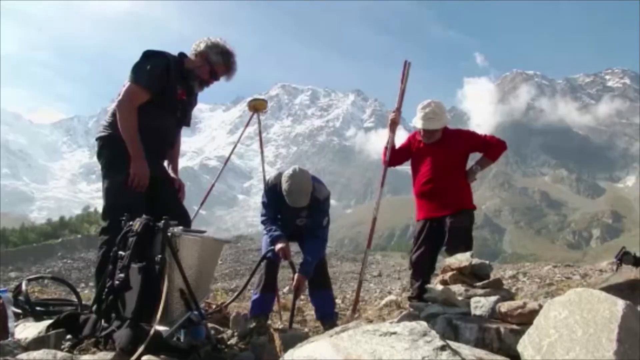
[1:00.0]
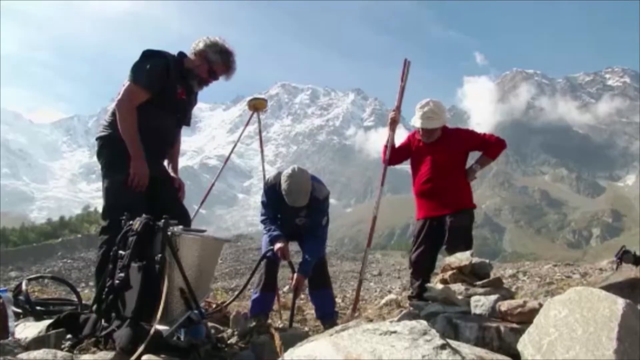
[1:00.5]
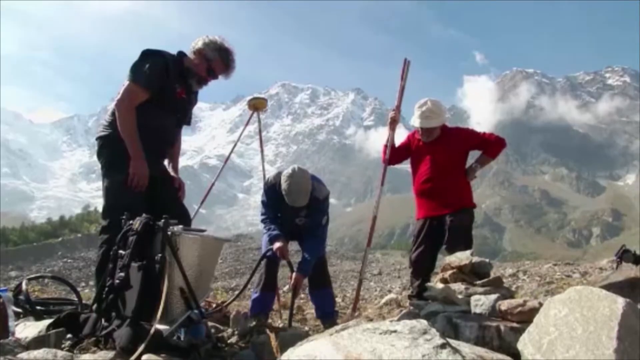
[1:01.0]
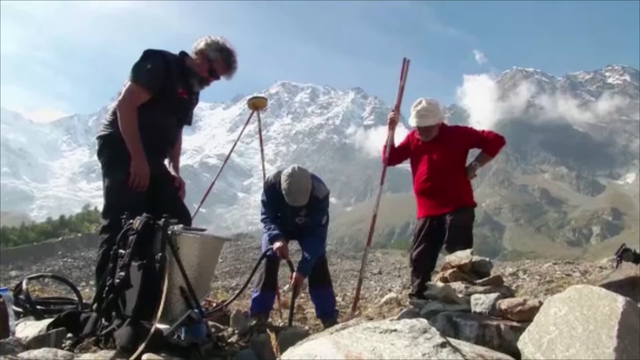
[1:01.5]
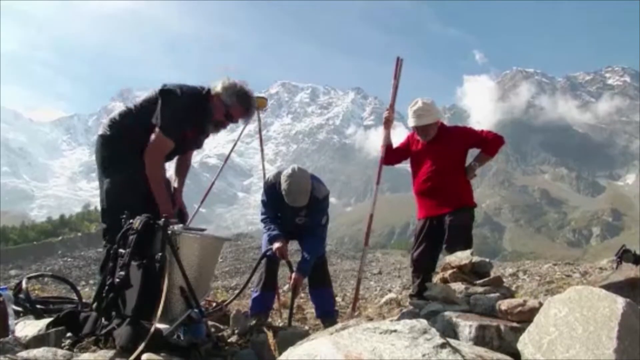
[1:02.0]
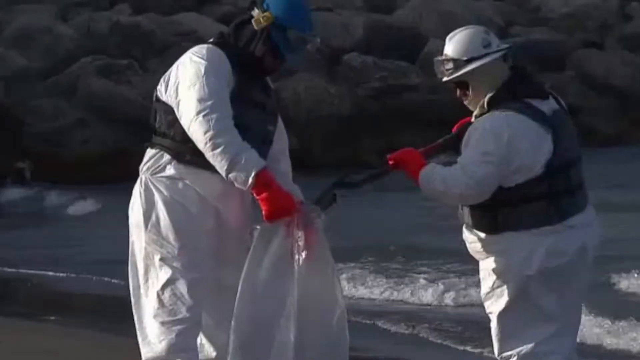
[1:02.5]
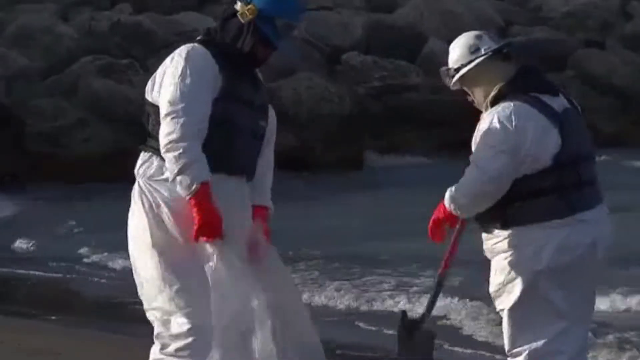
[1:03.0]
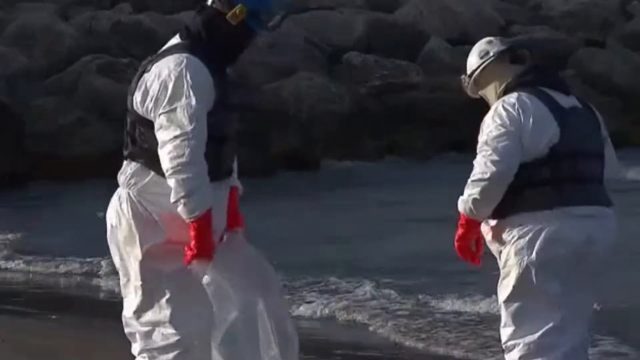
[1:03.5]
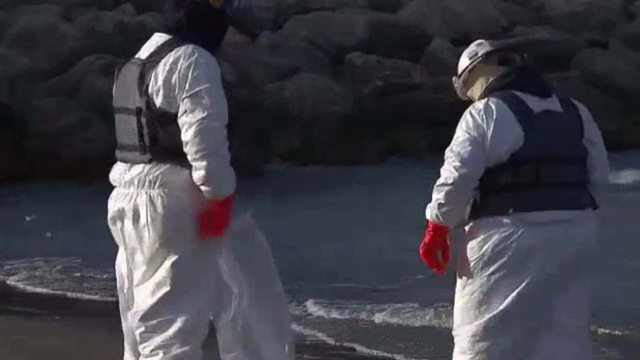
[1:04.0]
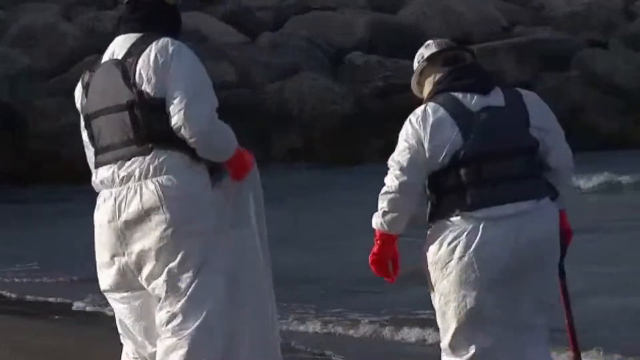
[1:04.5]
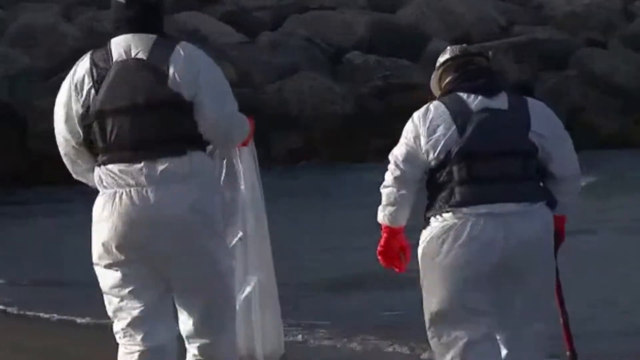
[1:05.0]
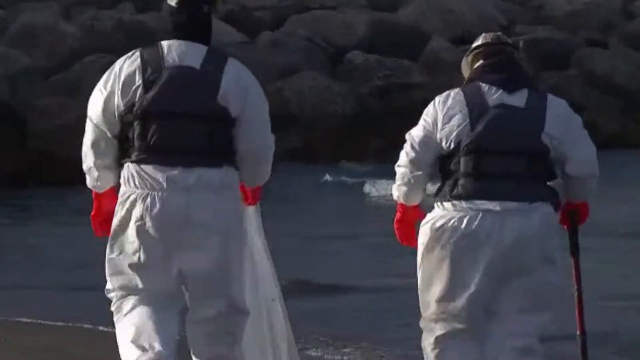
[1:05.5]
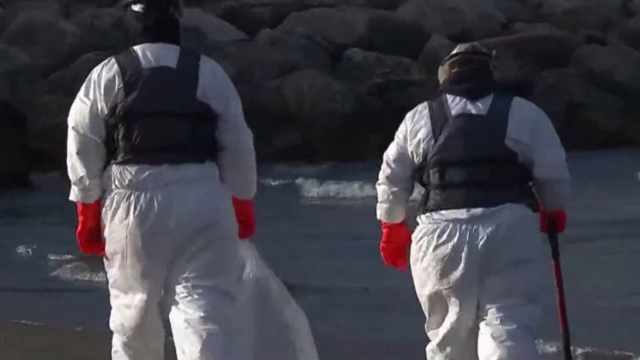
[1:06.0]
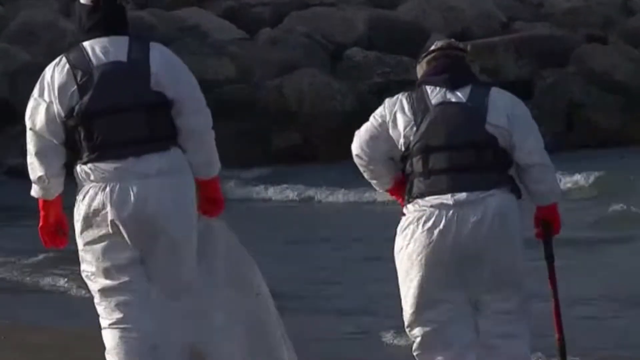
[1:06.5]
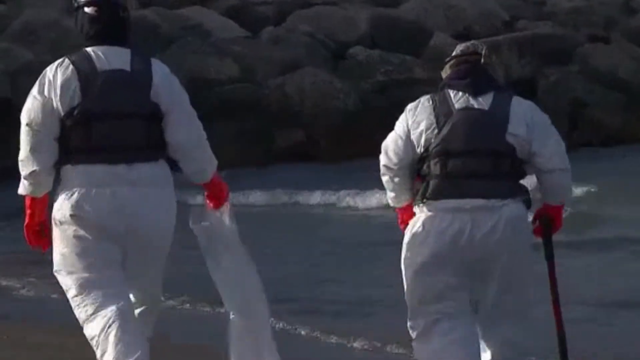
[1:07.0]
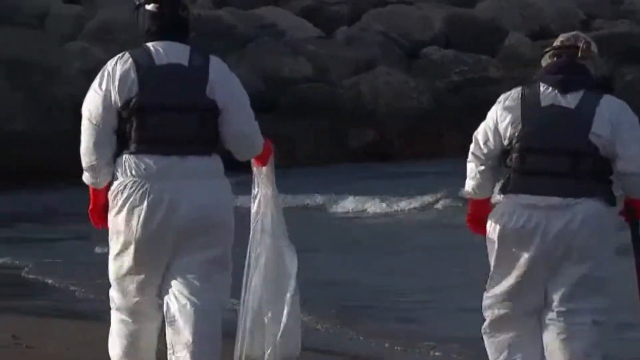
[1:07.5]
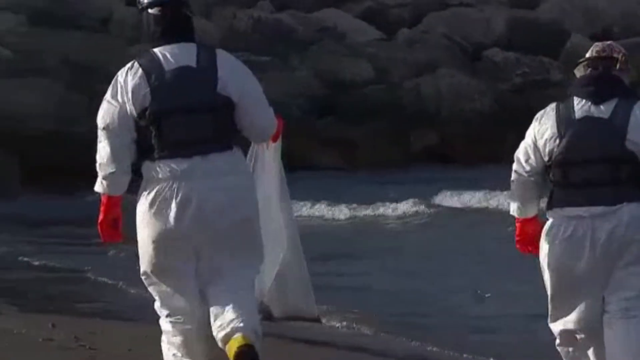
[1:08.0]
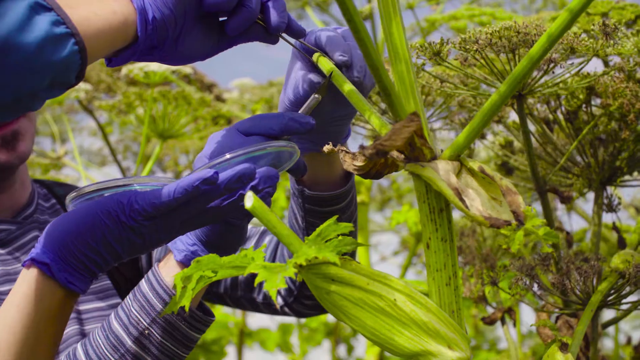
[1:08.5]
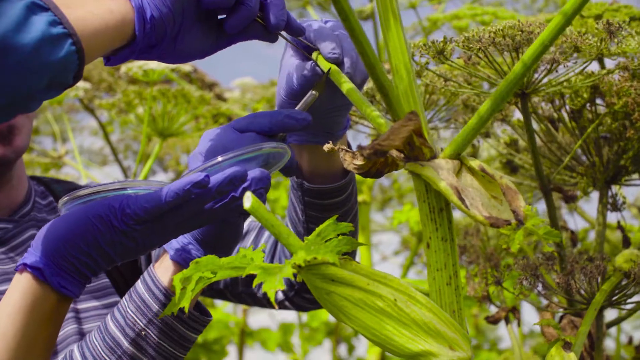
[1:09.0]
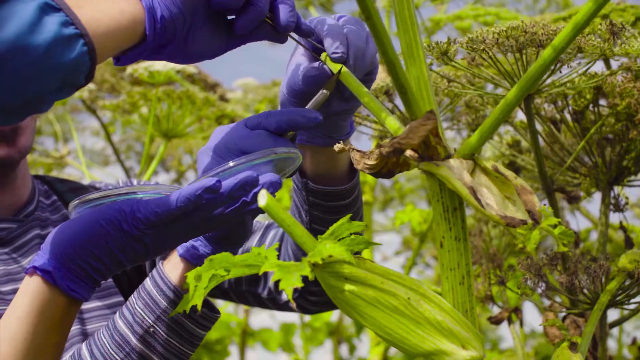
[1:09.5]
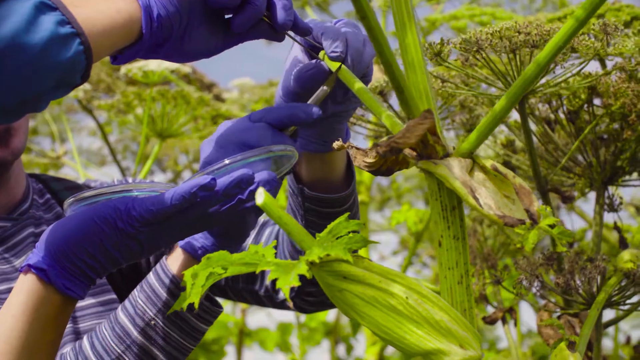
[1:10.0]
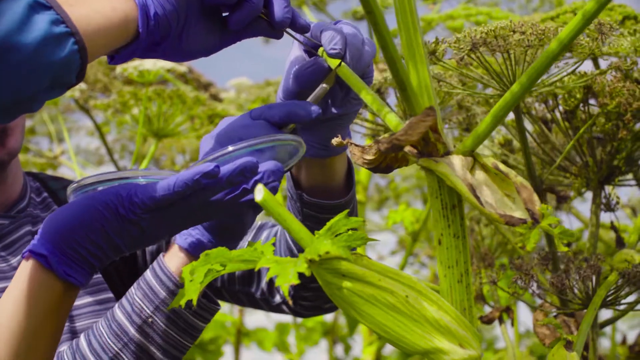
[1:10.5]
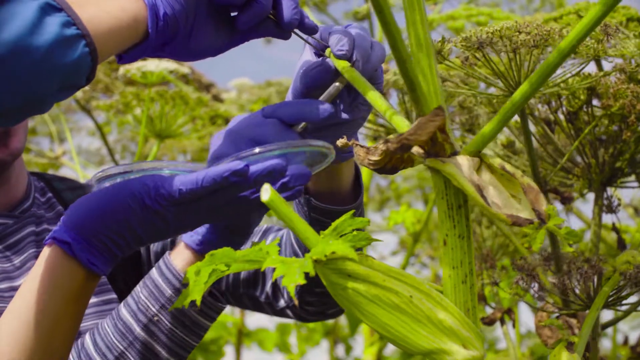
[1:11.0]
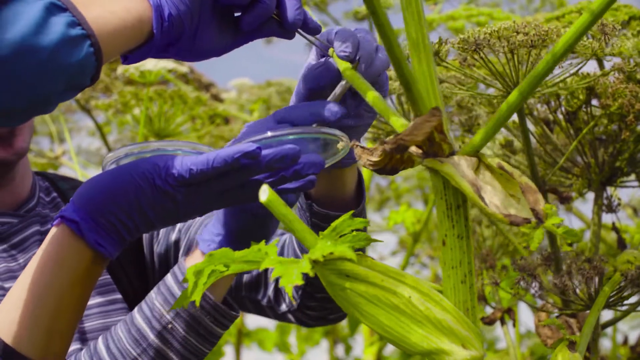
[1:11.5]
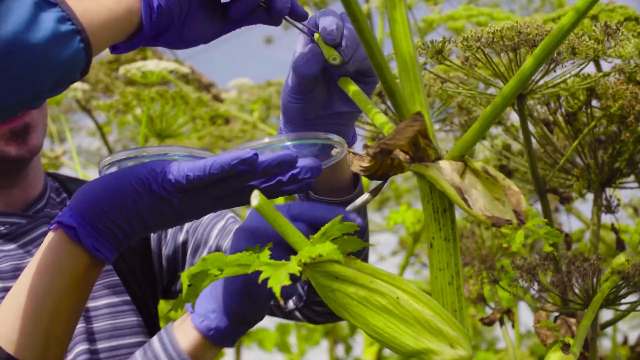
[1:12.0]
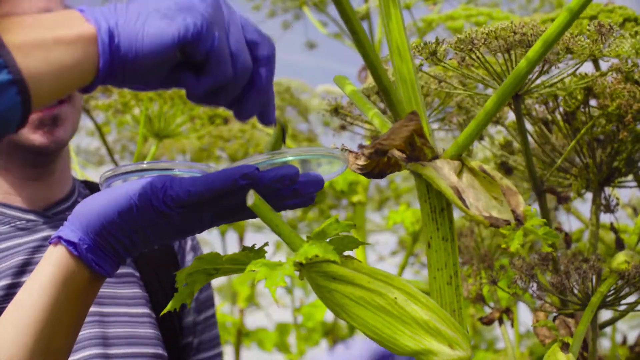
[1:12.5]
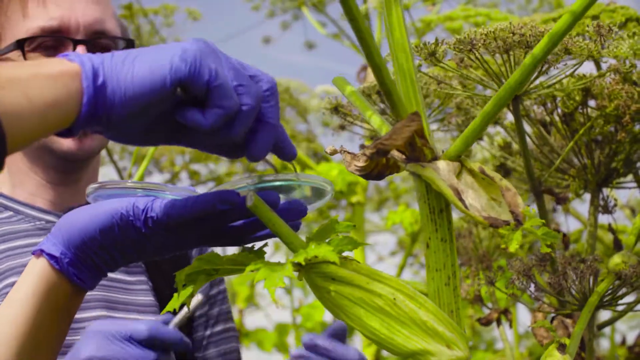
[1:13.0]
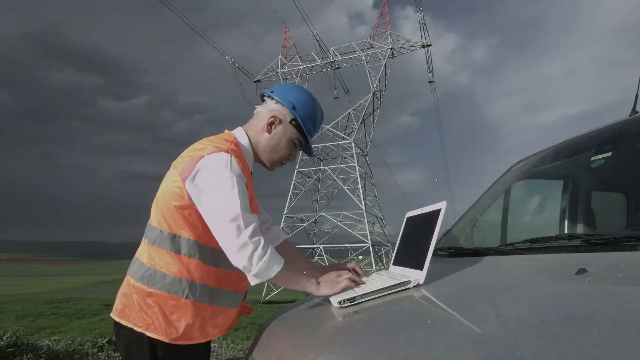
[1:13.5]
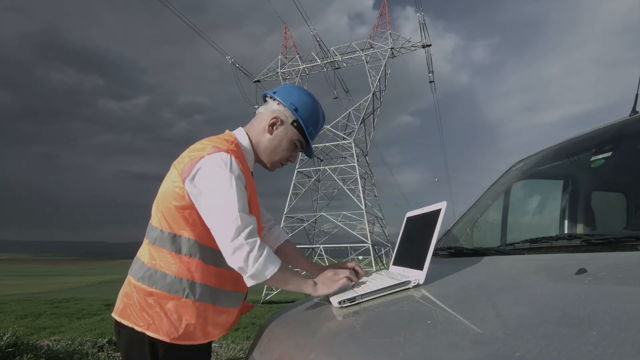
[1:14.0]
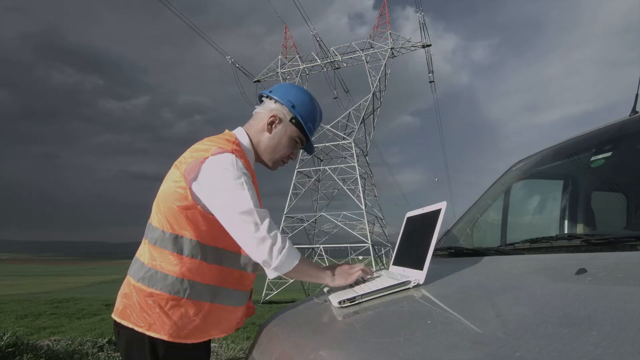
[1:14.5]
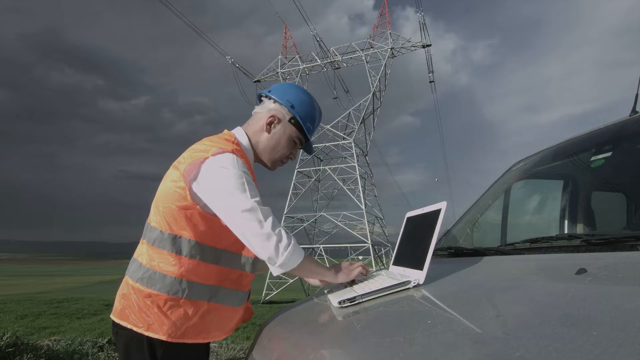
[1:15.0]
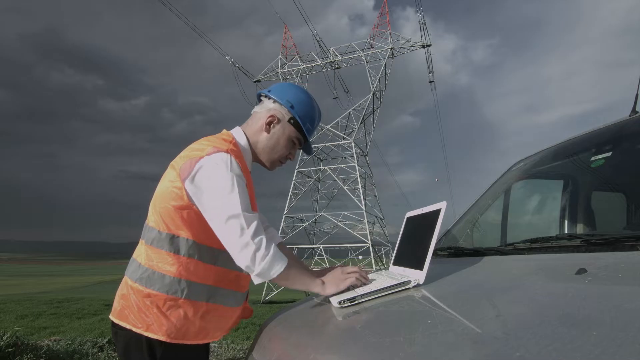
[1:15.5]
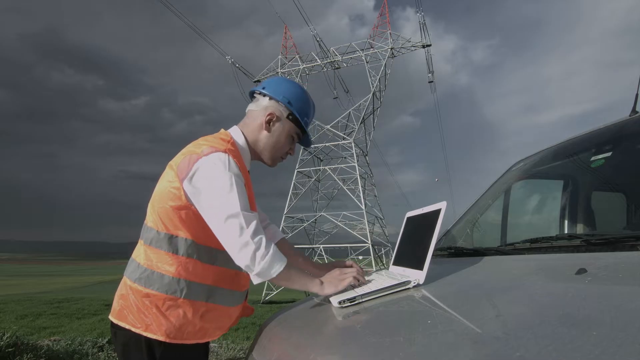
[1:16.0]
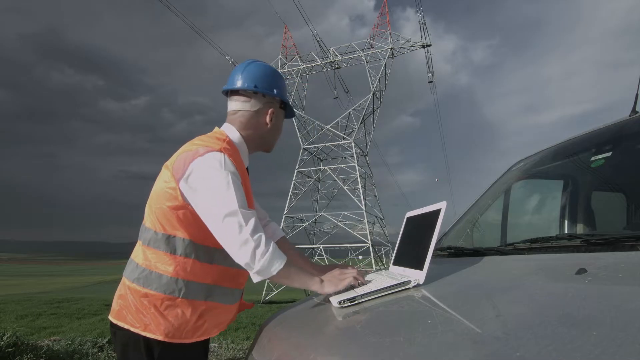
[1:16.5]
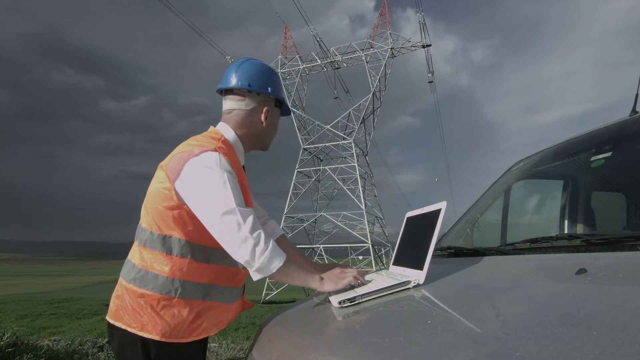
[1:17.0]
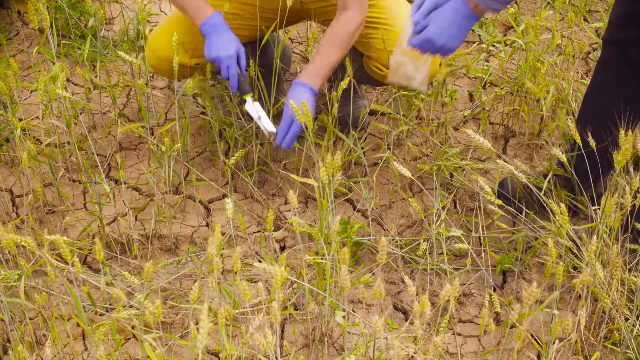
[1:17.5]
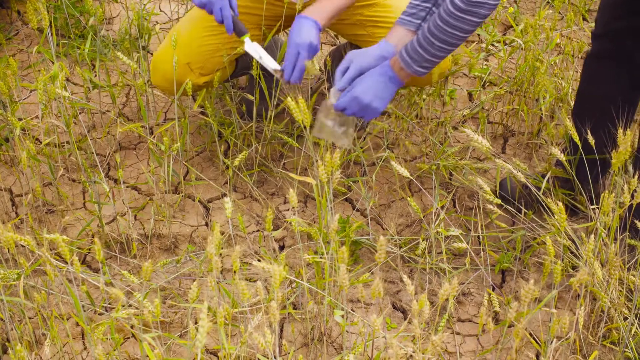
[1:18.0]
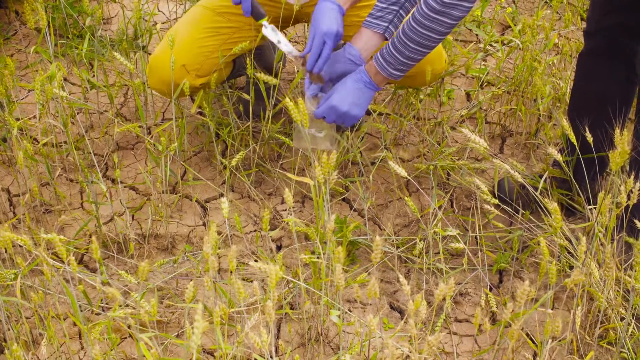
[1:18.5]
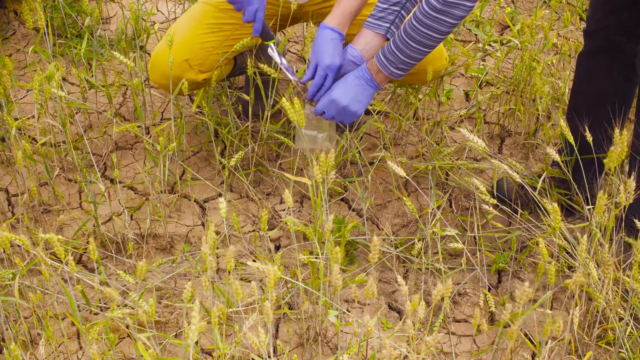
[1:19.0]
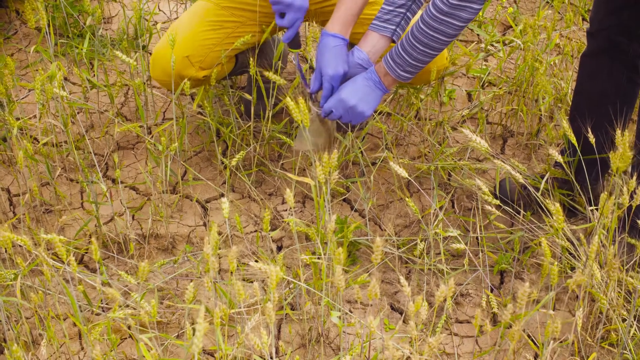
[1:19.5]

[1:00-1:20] Three people appear to be on top of a mountain, with mountains covered in snow behind them and a lot of equipment around them. Next, two workers walk along the shore wearing white jumpsuits with black vests and red gloves, and apparently hard hats. The person on the left grips a clear plastic bag in their right hand, while the person on the right, holding a shovel in their right hand, appears to be picking up garbage or something else. They walk away from the foreground toward the background, so only their backs are visible. Then two individuals wearing blue latex gloves cut branches from green plants; the person on the right holds a branch with tweezers as the other person cuts, and holds in their left hand two petri dishes into which they put the samples. Next, a man has a white laptop on top of the hood of his car and stands over a large electrical structure, kind of like an electrical grid. It looks like it is about to rain. Then more people are getting soil samples.